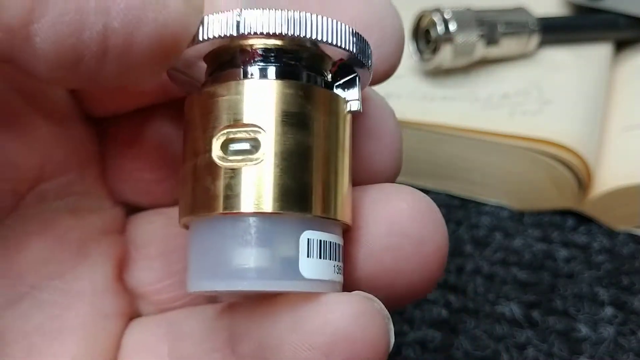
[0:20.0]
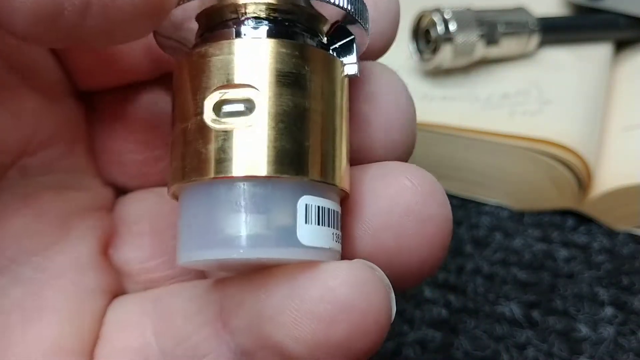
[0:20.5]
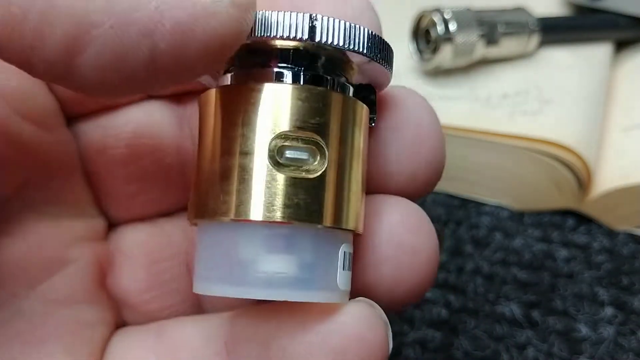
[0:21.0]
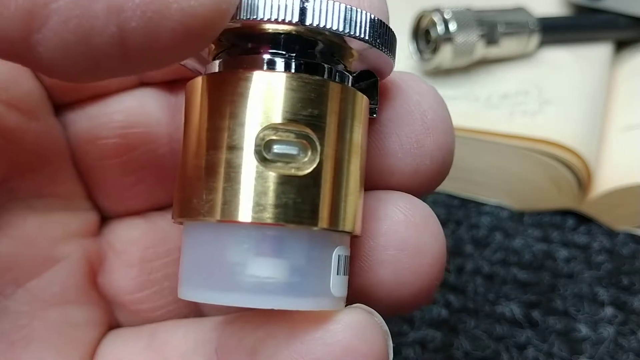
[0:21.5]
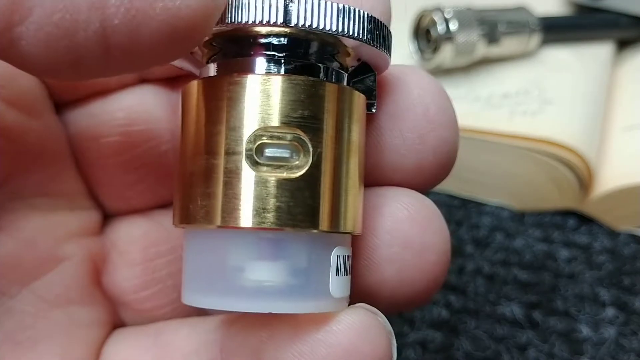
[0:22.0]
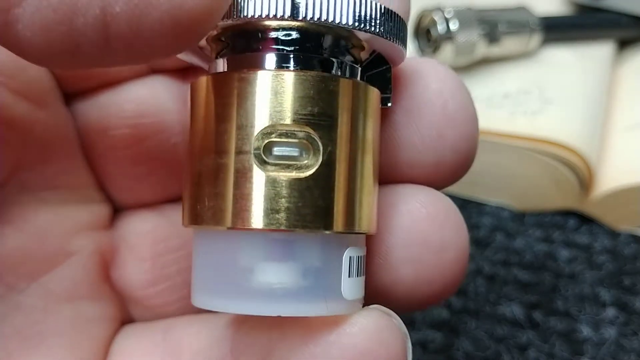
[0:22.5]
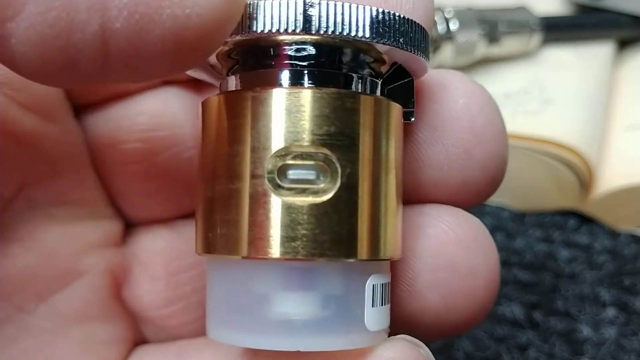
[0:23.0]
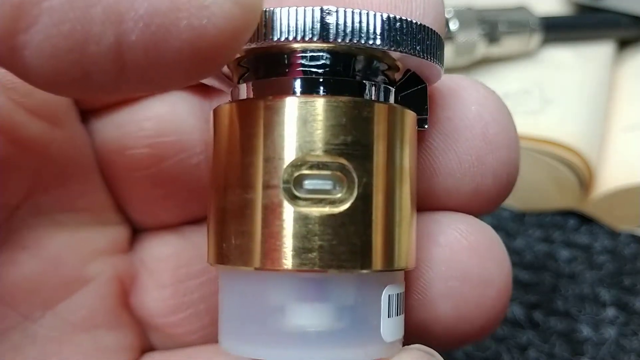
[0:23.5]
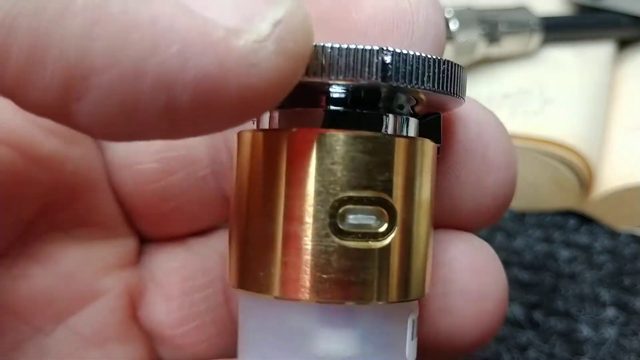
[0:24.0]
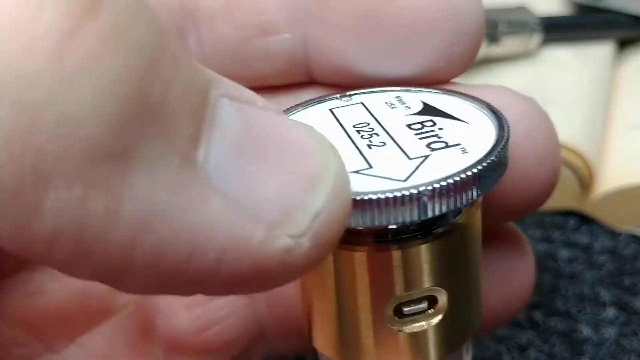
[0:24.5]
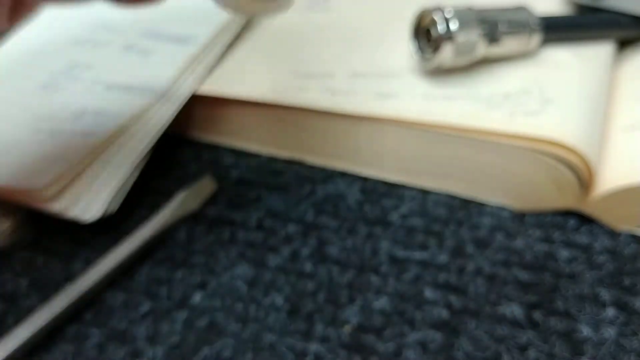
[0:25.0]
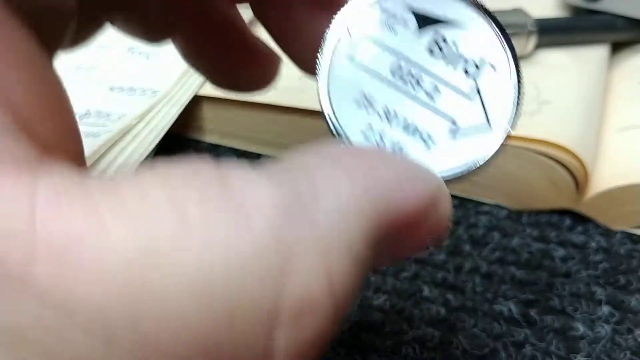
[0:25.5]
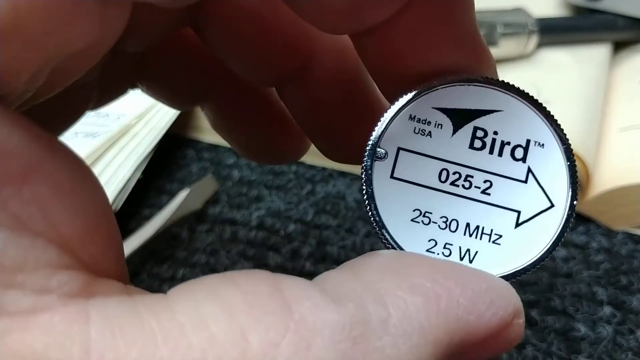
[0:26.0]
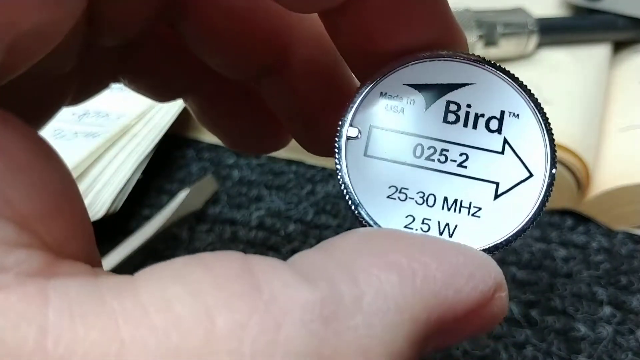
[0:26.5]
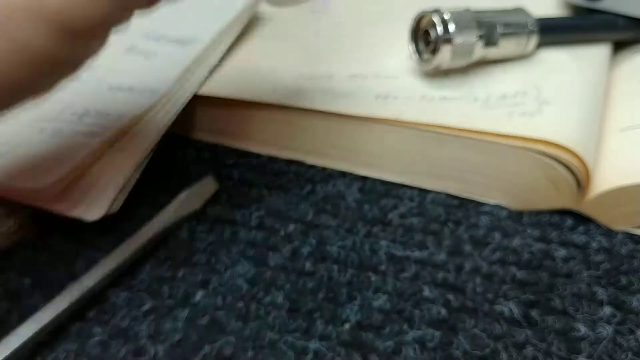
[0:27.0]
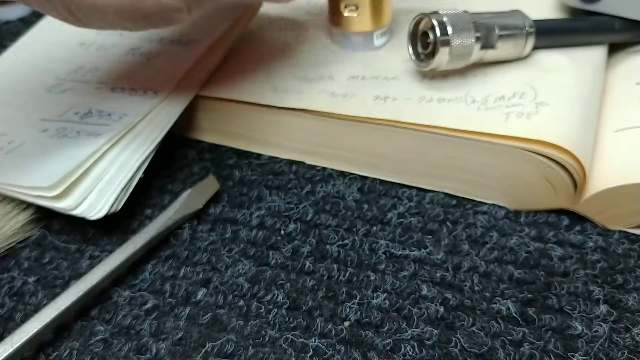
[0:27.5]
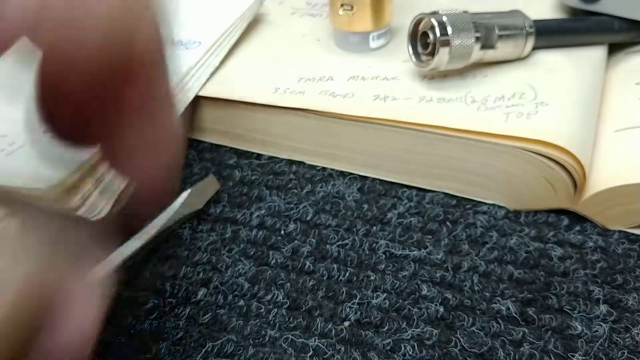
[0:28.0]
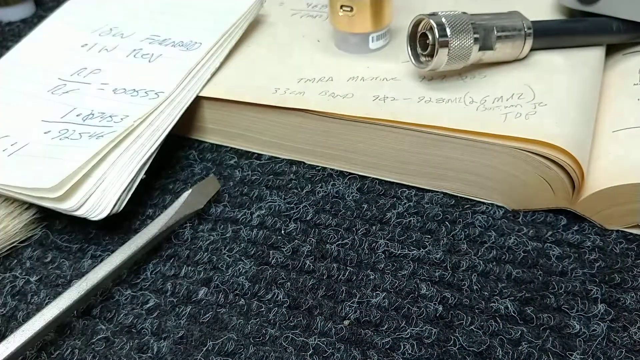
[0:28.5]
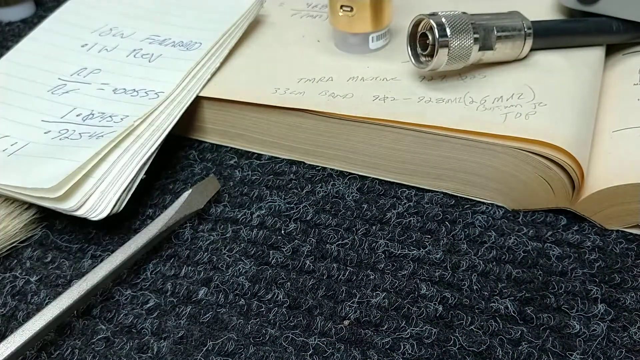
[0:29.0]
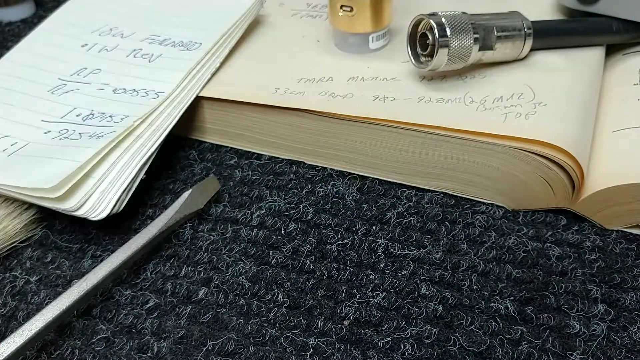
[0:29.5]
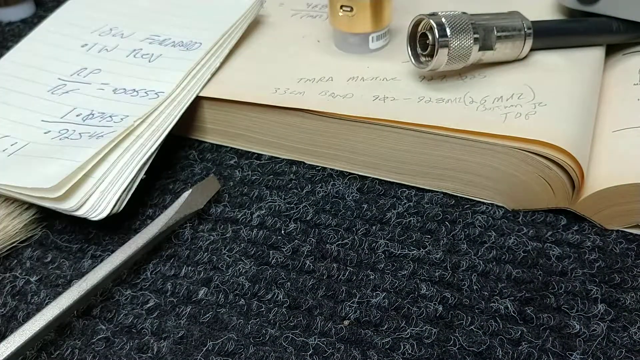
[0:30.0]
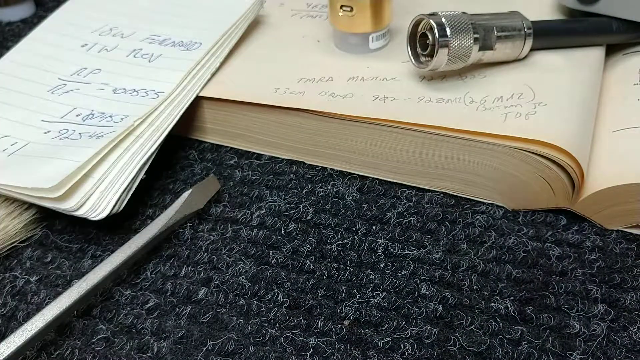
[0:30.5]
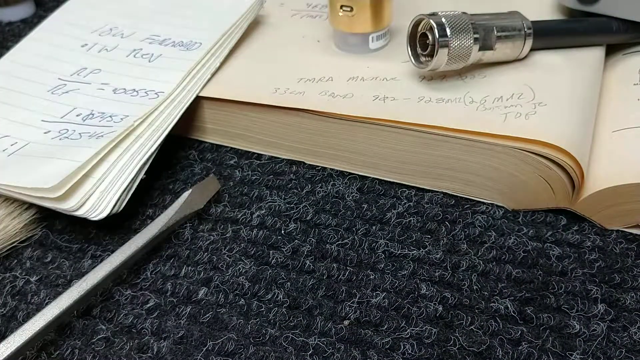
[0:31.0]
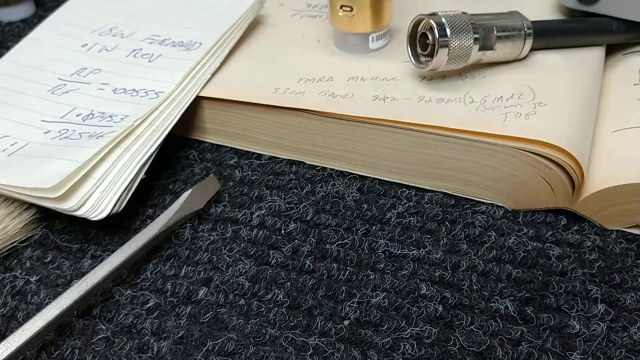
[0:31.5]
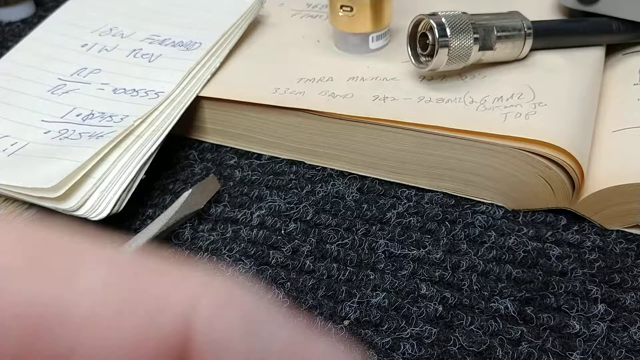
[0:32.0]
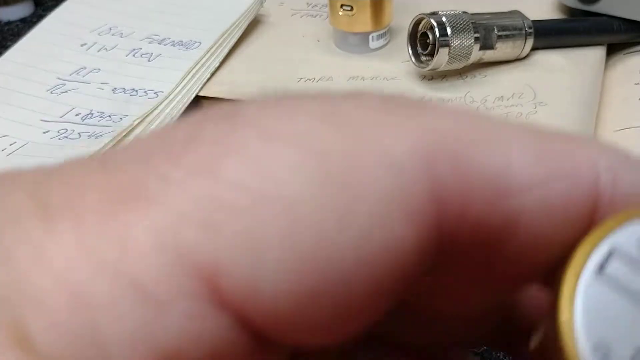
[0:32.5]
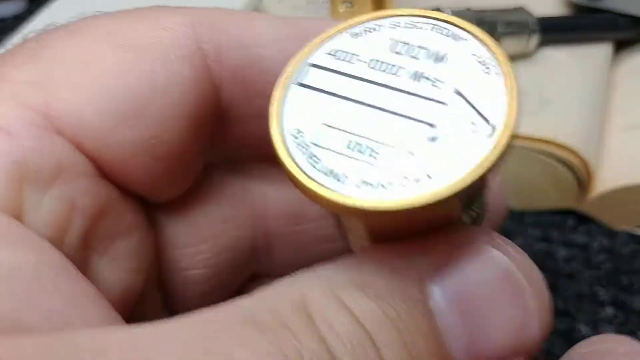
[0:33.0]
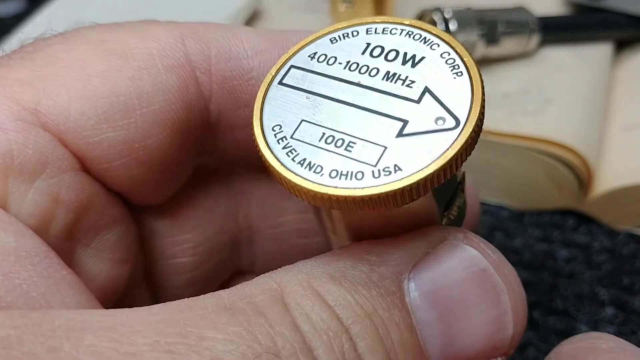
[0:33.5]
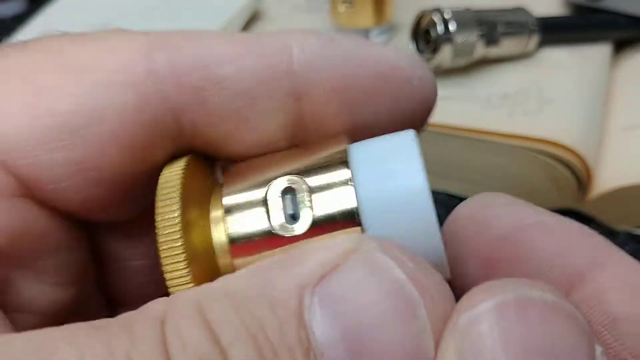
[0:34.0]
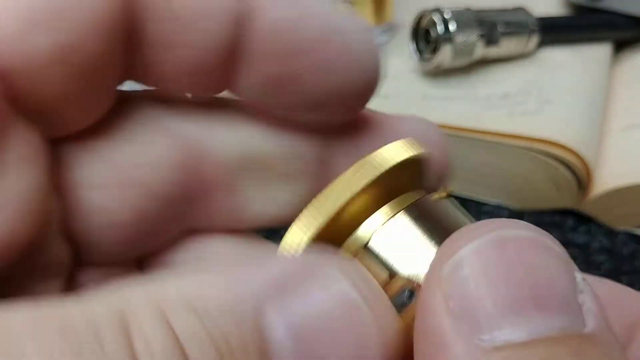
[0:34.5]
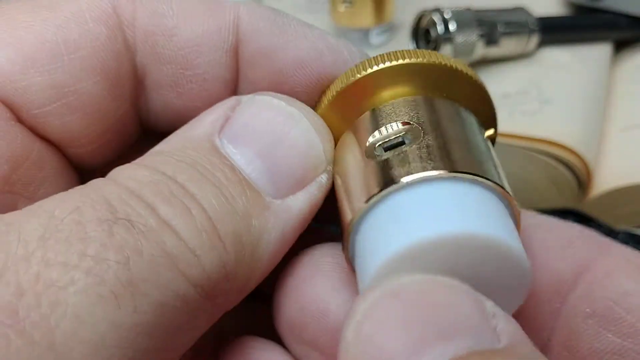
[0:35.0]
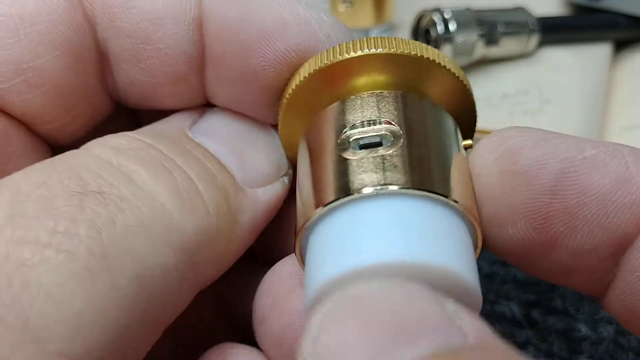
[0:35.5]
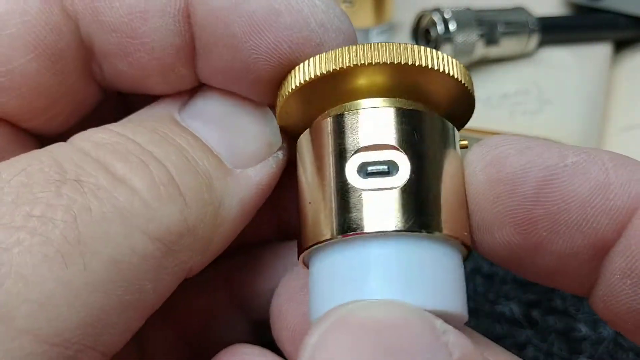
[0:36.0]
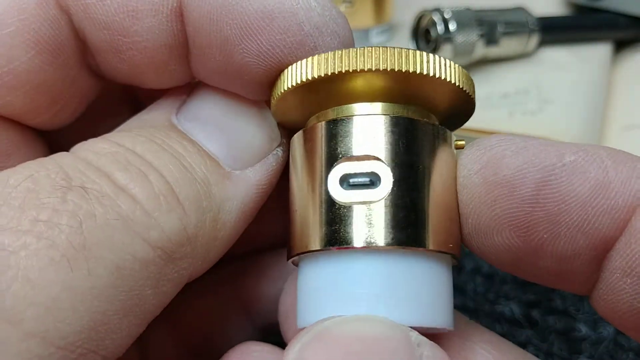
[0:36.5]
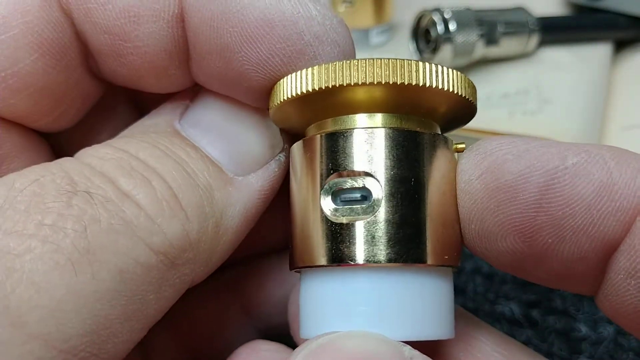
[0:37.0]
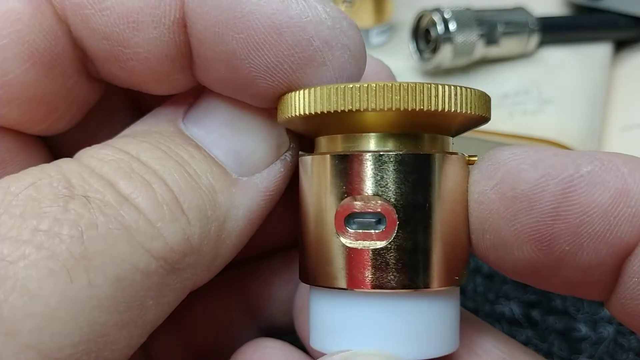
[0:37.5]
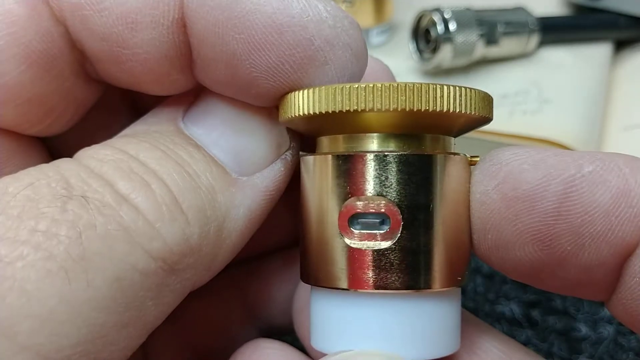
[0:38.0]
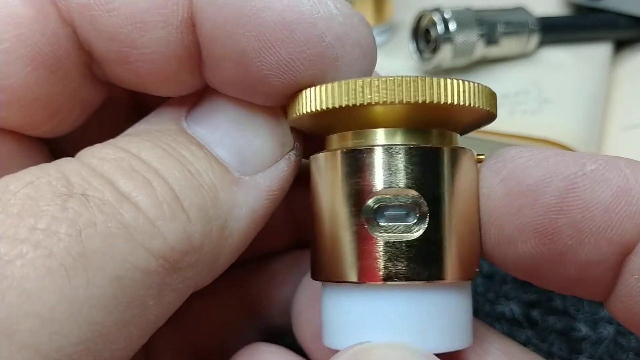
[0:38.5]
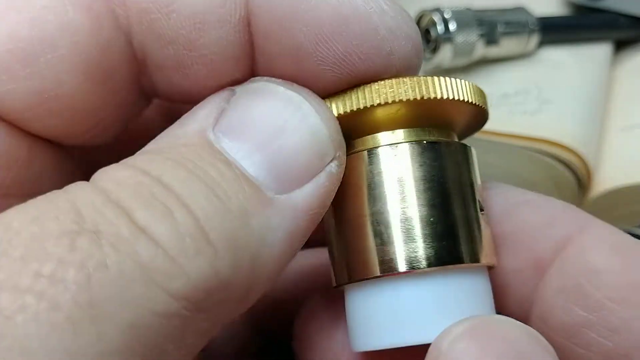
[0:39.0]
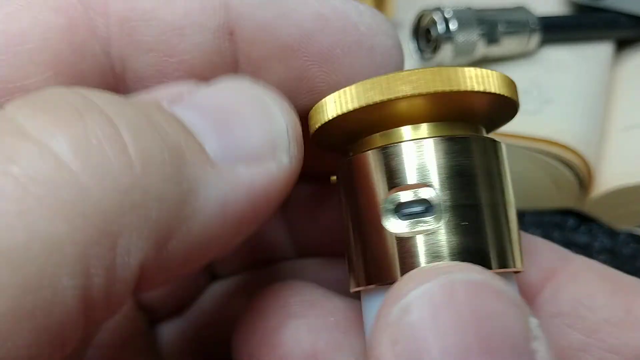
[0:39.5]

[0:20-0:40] The person holds what looks like a container. Its top has a sort of silver metal, and underneath there is gold metal that seems to cover plastic beneath it; the plastic is white and a little see-through. The person holds it in their left hand up to the camera. In the background is an open book and another tool that looks like a tube with a silver metal attachment, apparently an air pressure gun. He keeps moving the object in his hand, moves it back, then moves it toward the book and places it on top of the book. The book is on what looks like gray carpet with white fibers coming off it that look like hair. There is also a gray screwdriver and a notepad.